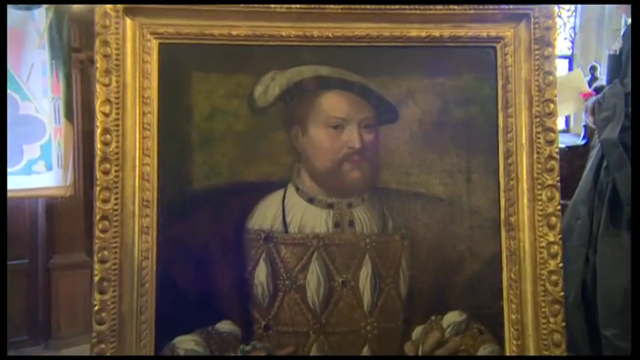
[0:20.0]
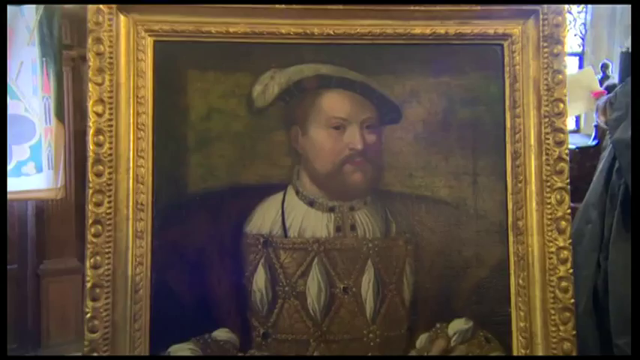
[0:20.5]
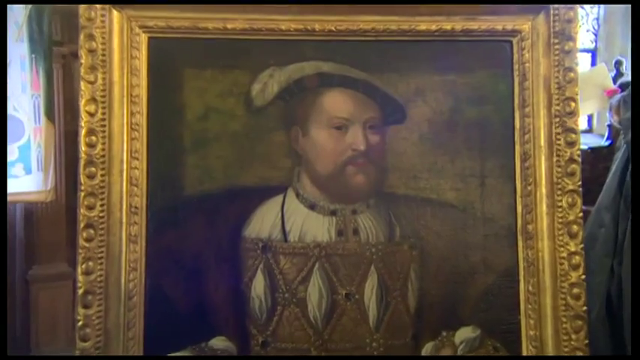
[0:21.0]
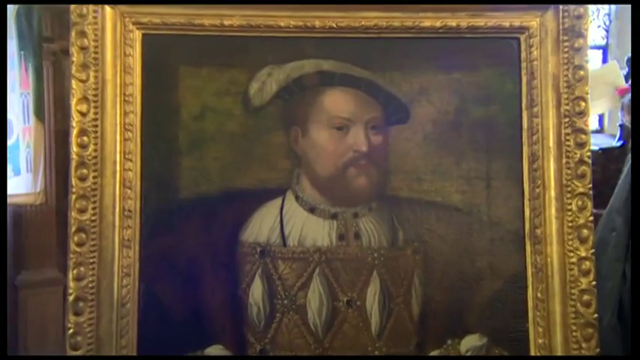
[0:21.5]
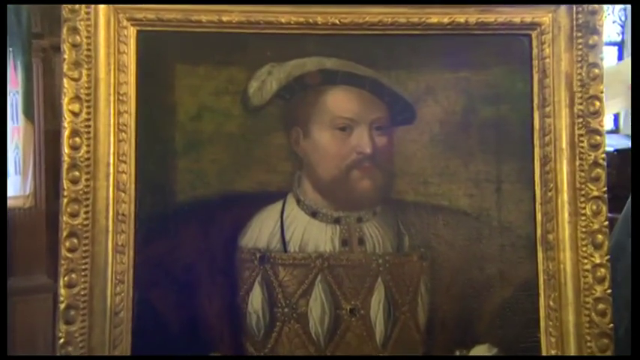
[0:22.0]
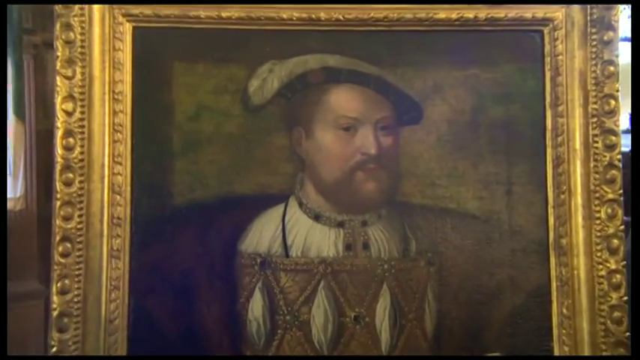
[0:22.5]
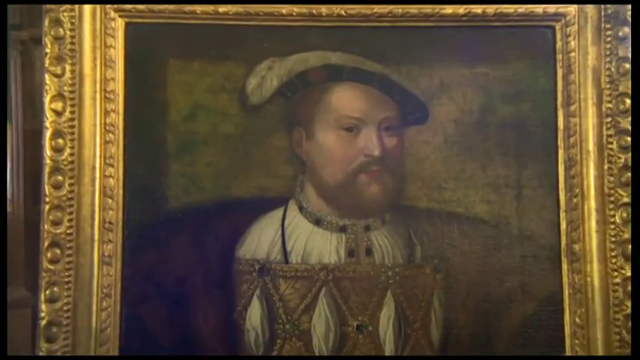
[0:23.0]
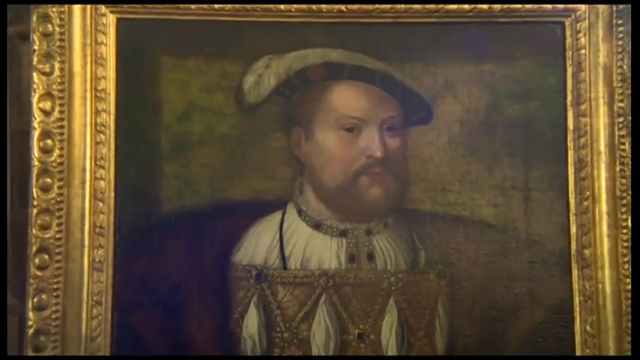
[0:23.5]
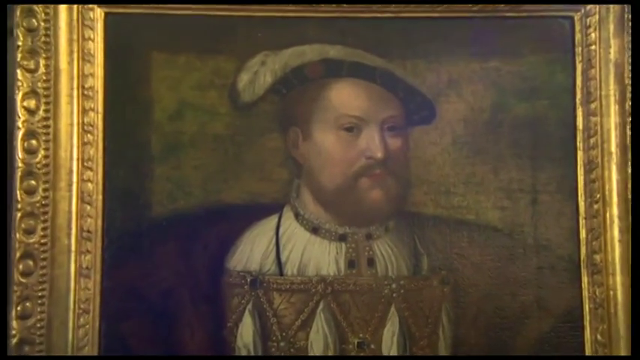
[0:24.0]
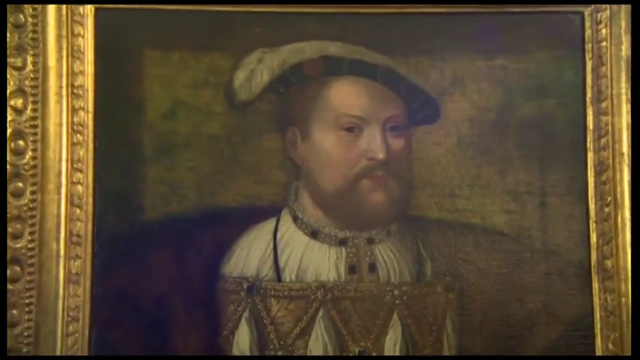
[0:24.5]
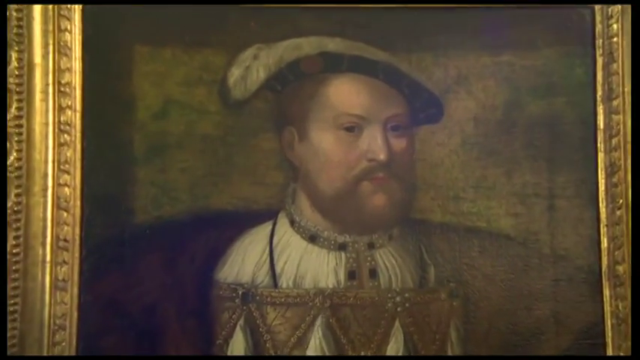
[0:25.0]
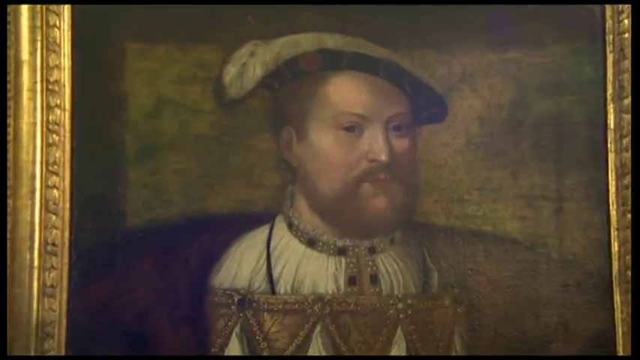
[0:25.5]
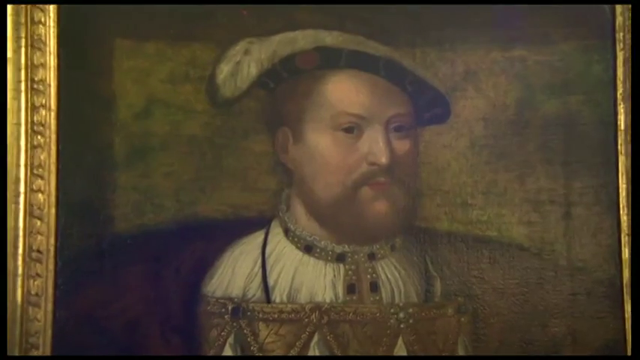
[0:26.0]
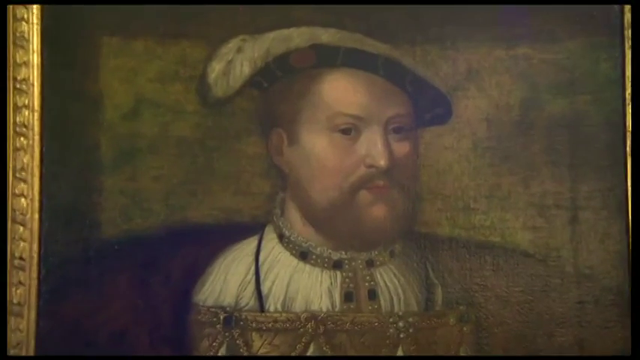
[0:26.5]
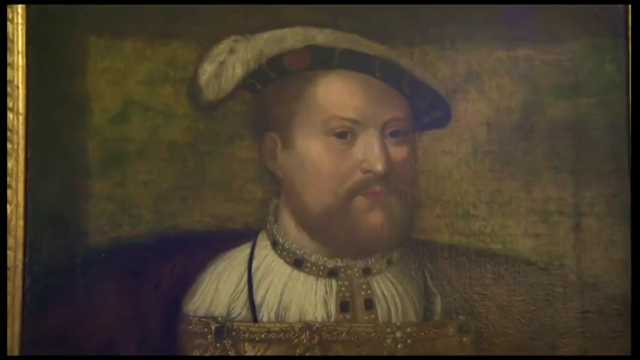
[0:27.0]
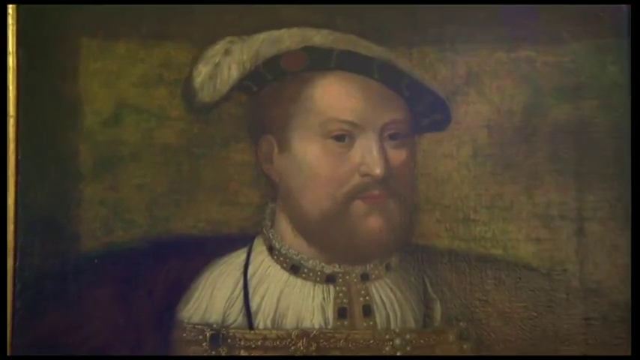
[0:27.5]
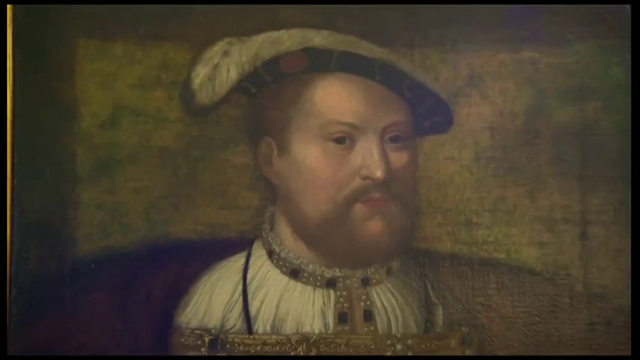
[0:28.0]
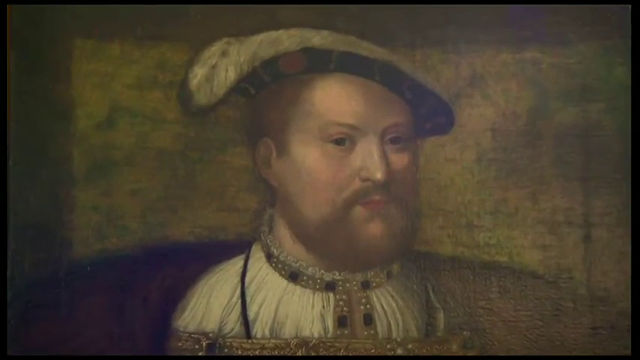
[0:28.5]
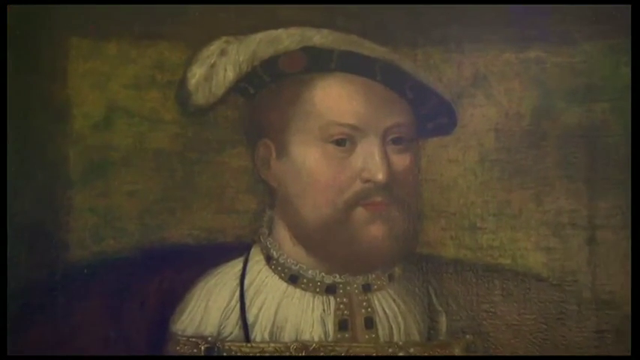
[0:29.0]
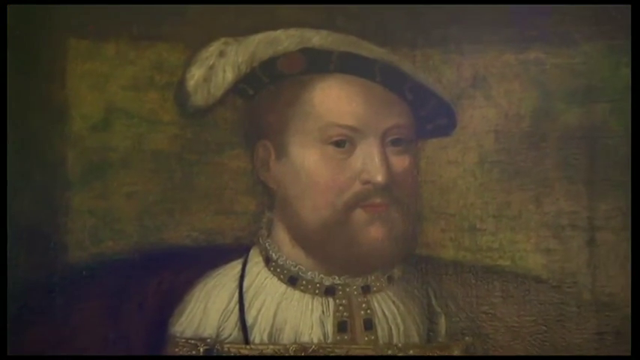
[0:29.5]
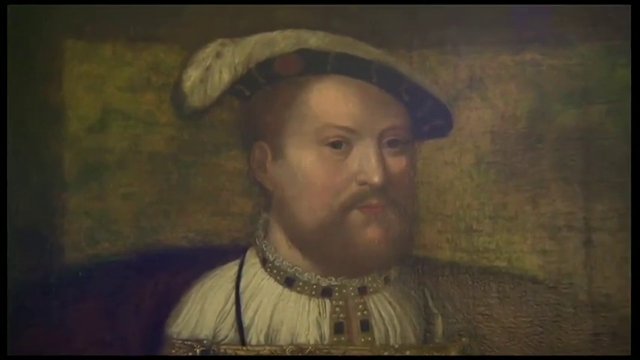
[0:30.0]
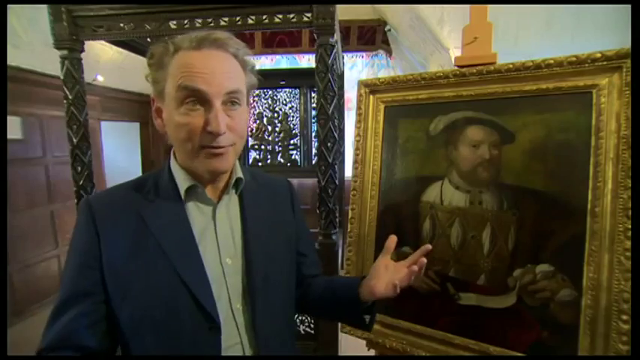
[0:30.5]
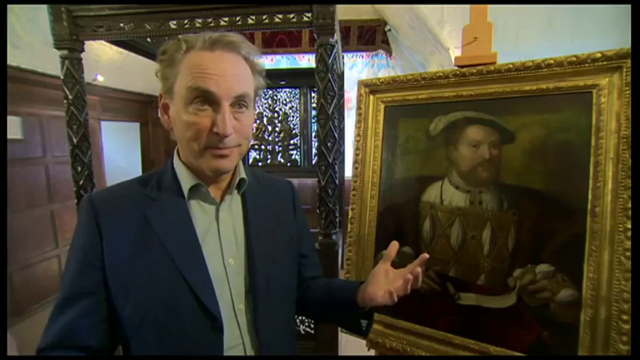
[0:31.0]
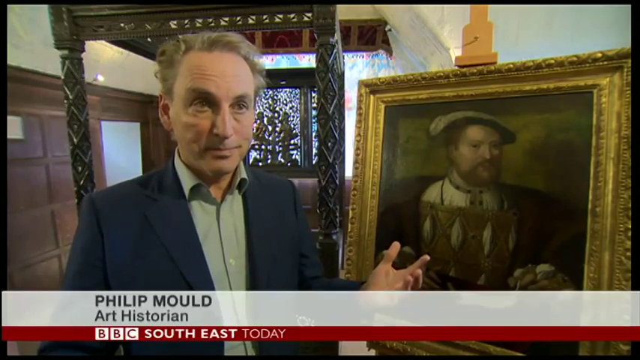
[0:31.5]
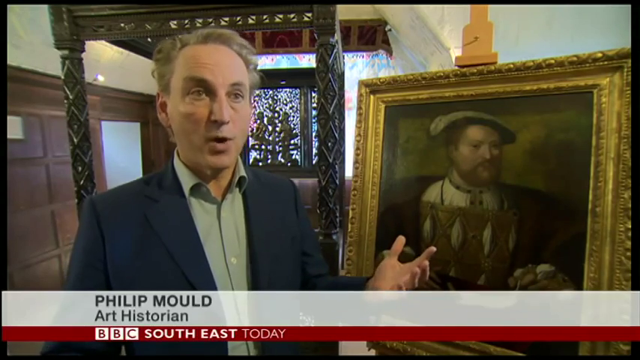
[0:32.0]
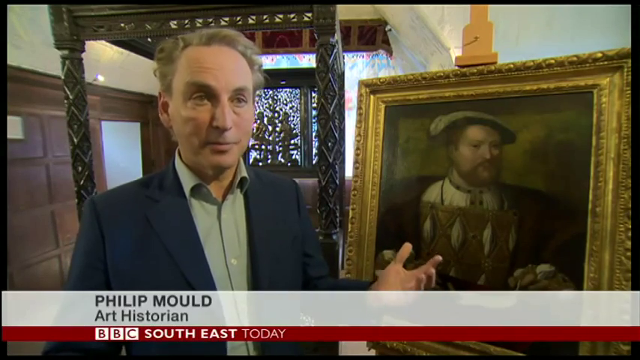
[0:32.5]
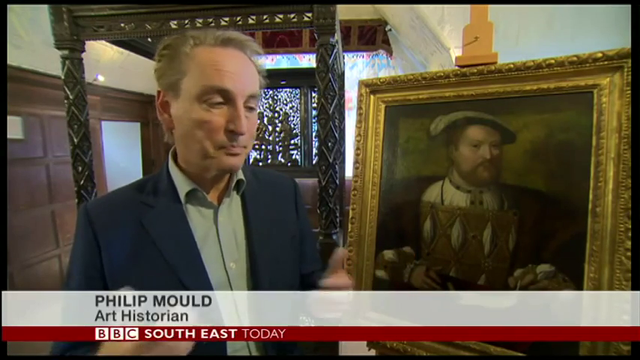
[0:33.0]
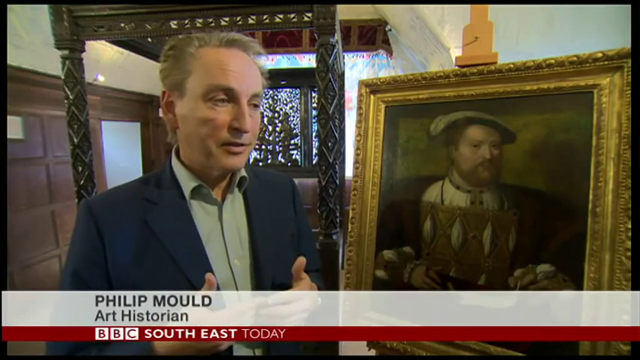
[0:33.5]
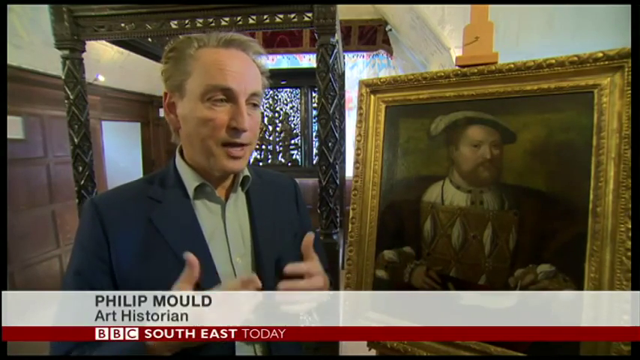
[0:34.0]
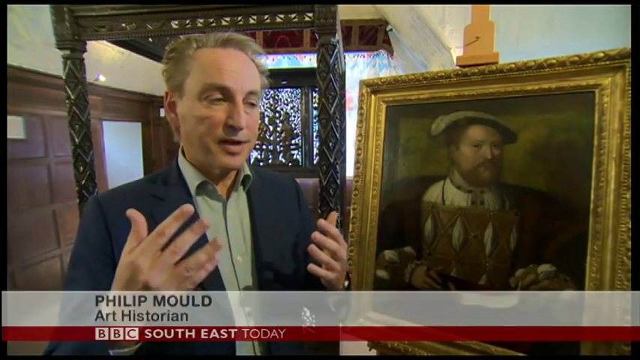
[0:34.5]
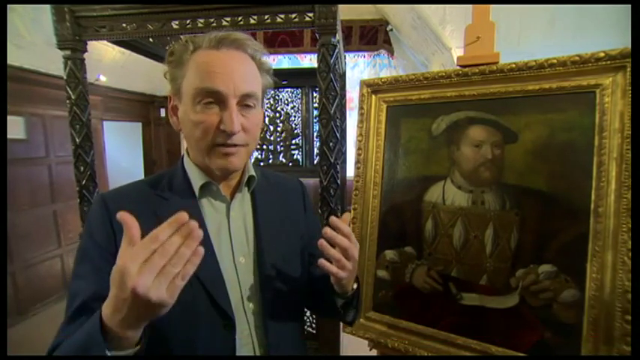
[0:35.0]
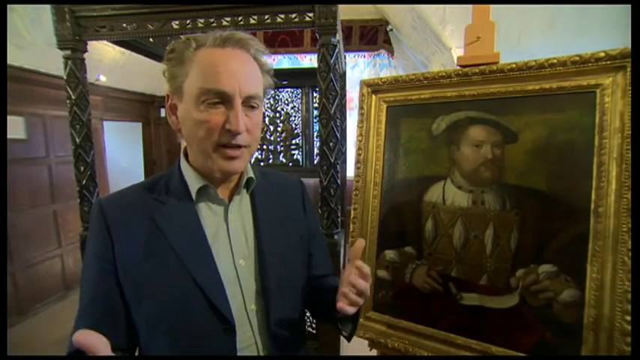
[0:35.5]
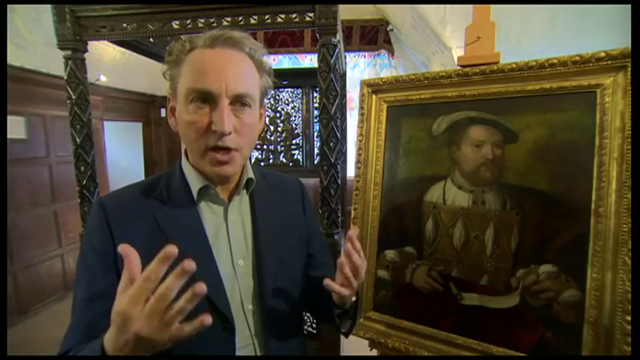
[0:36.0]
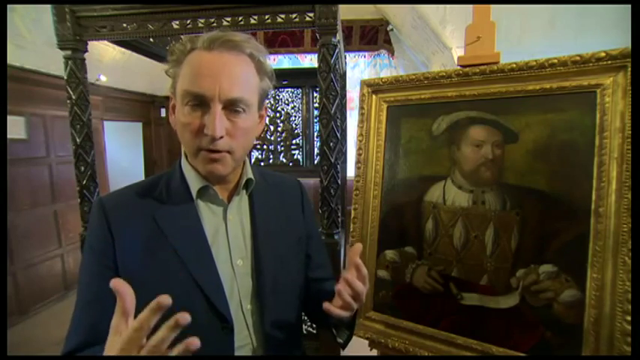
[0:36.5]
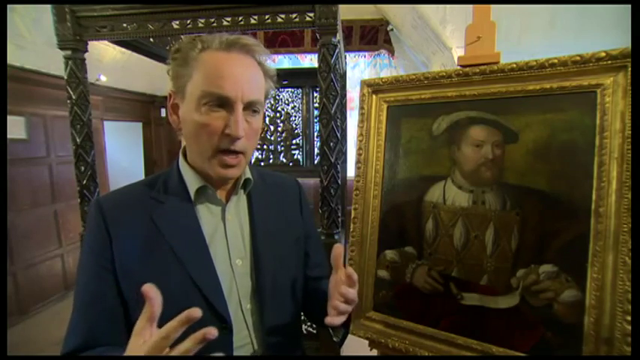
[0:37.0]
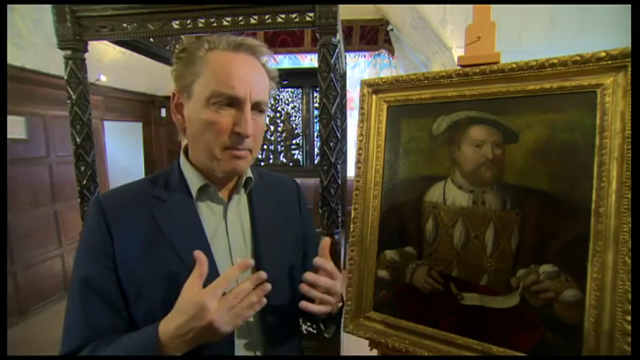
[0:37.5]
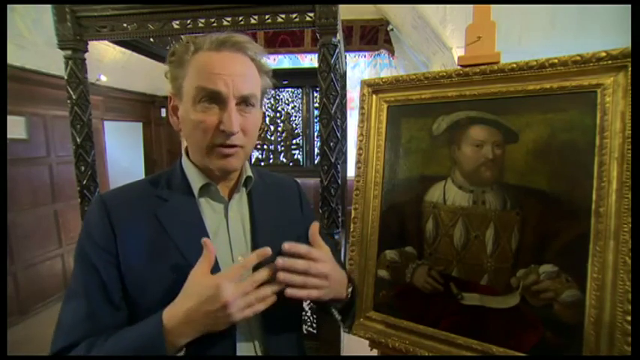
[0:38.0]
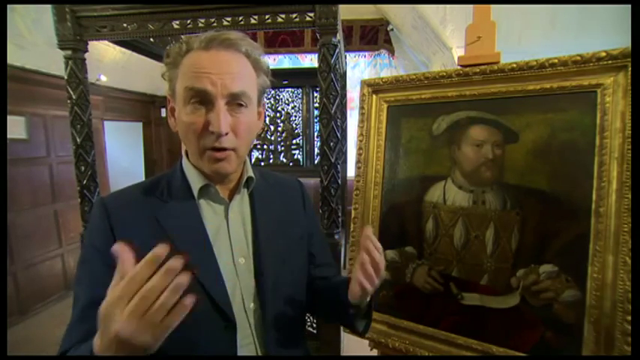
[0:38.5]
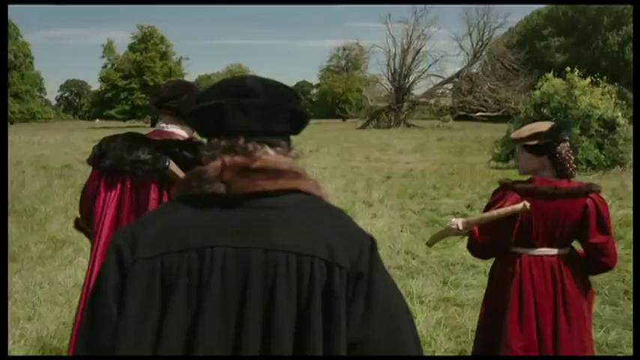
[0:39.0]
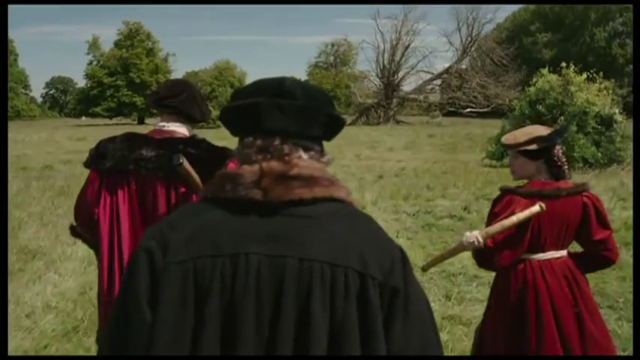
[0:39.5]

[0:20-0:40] The person in the pictures seems to be a king or a very important person, wearing a hat and very traditional clothing with a lot of design, and appears to be very powerful and rich. Some people are walking in an open field, but their faces are not visible.